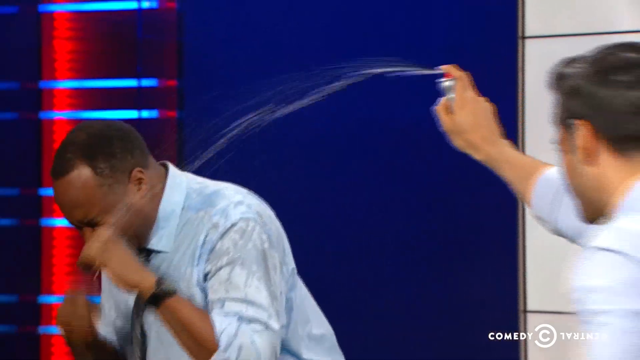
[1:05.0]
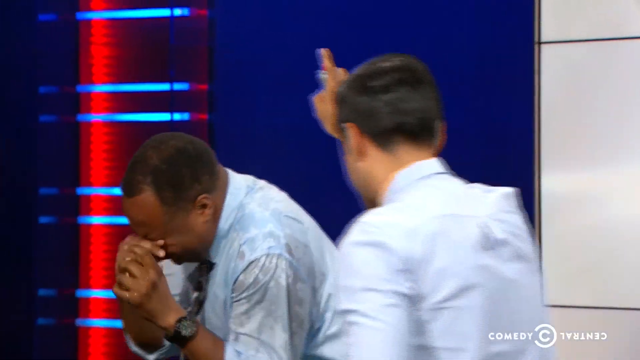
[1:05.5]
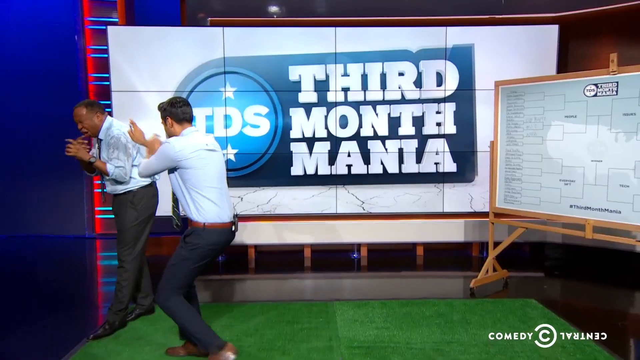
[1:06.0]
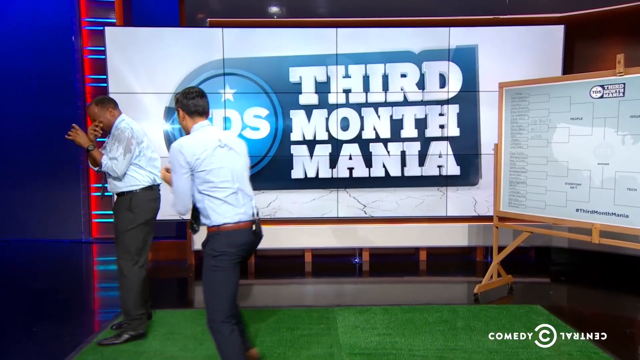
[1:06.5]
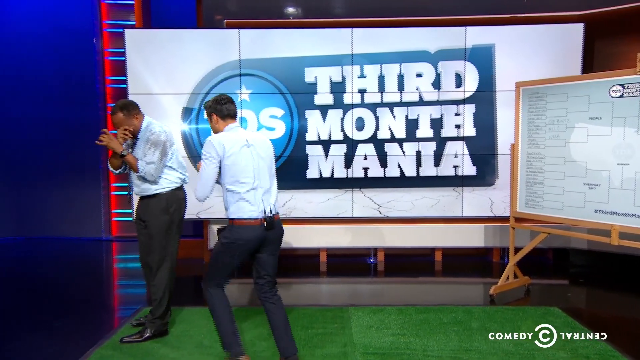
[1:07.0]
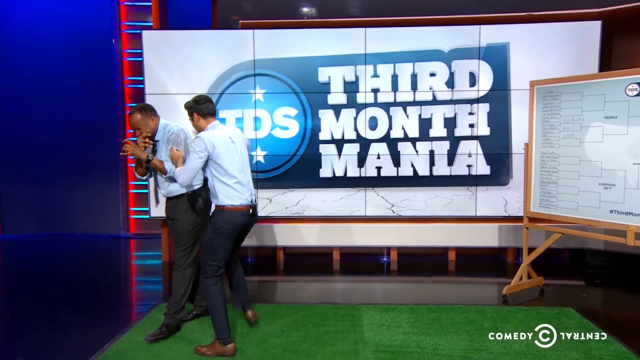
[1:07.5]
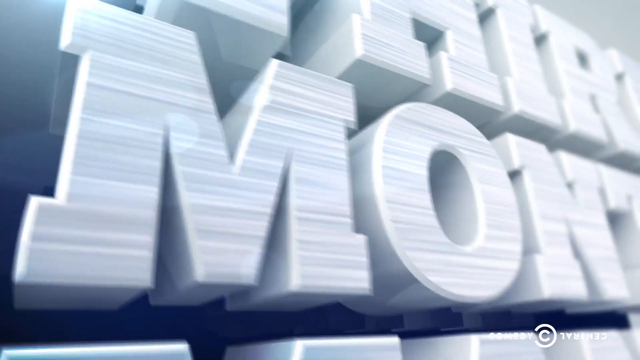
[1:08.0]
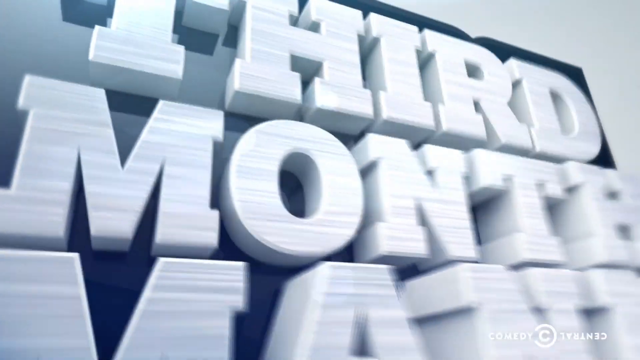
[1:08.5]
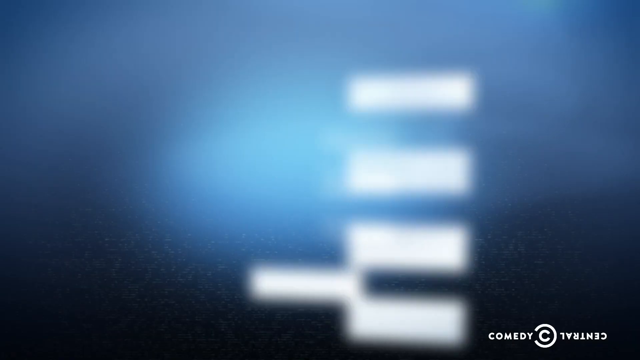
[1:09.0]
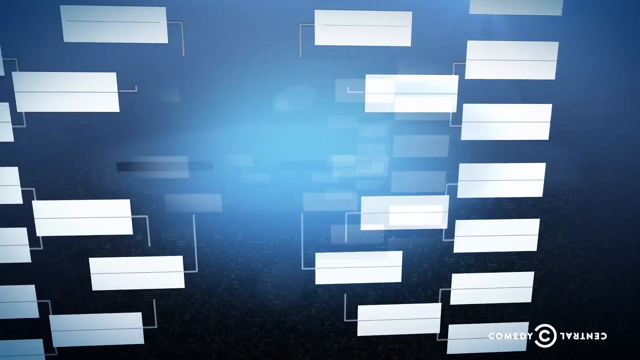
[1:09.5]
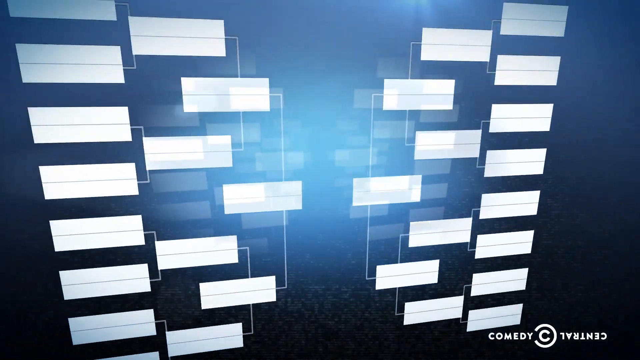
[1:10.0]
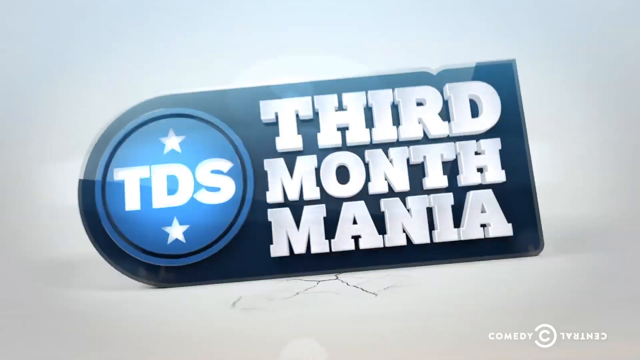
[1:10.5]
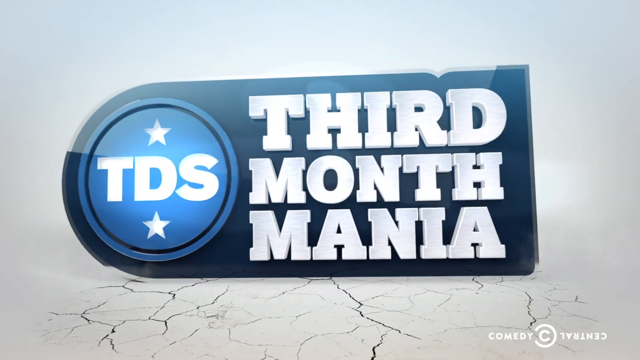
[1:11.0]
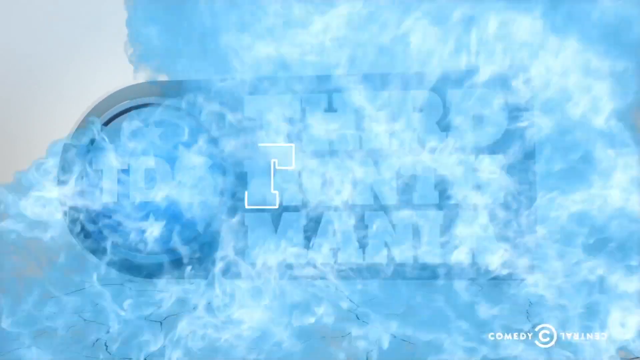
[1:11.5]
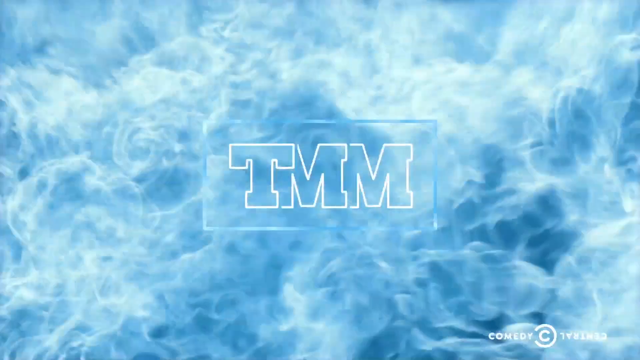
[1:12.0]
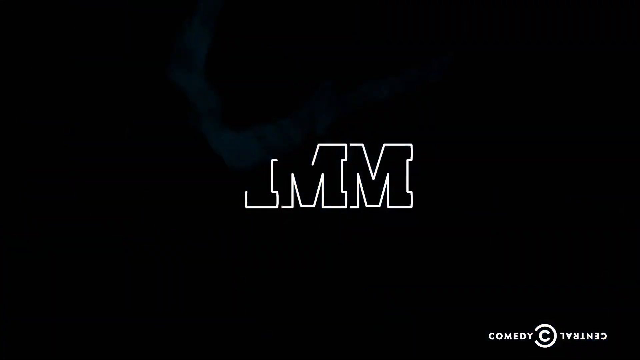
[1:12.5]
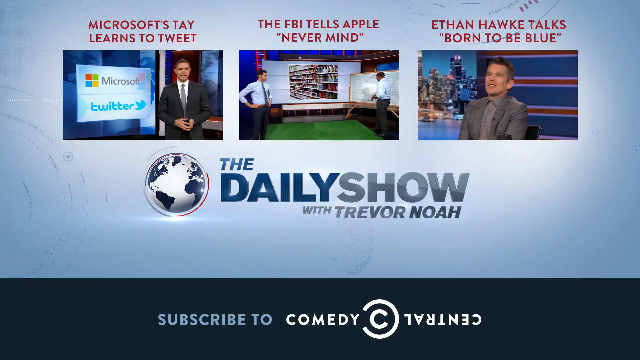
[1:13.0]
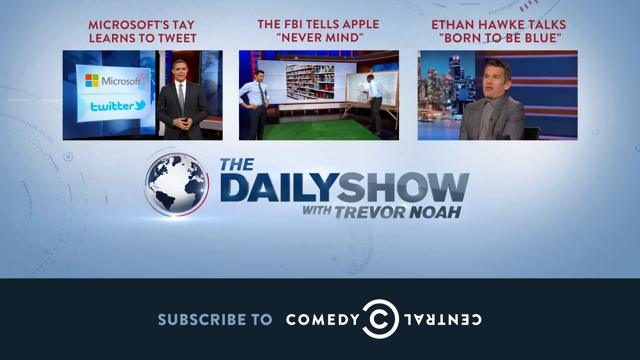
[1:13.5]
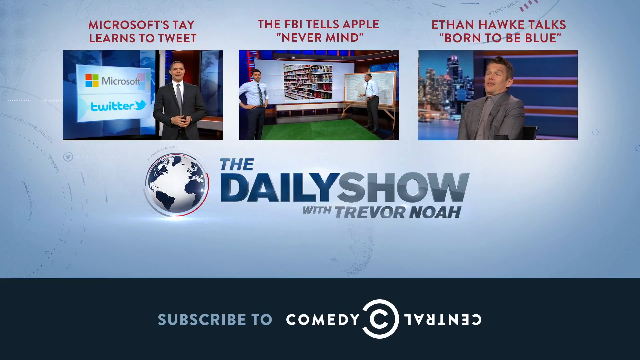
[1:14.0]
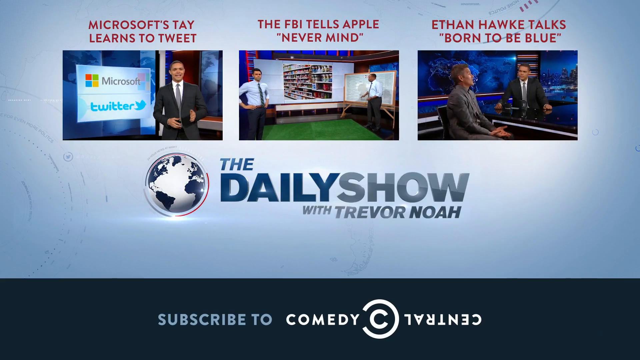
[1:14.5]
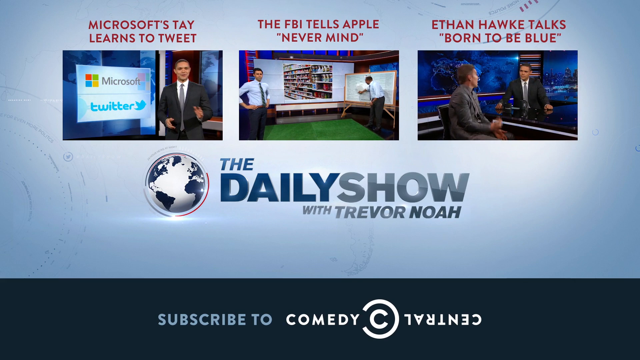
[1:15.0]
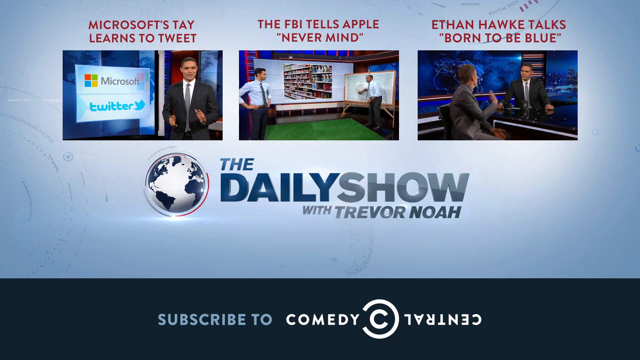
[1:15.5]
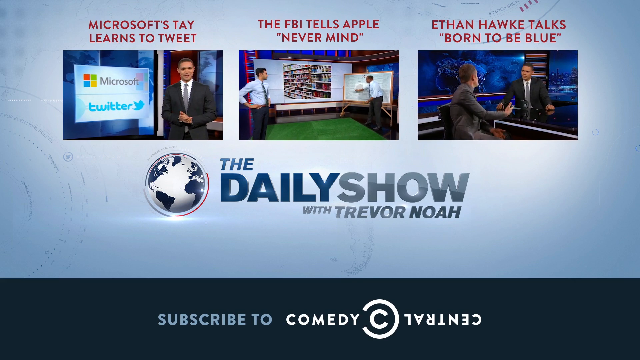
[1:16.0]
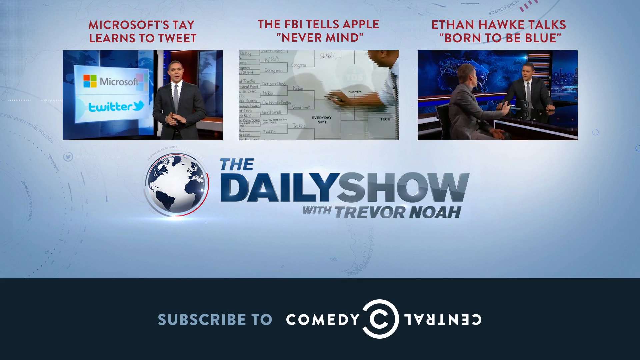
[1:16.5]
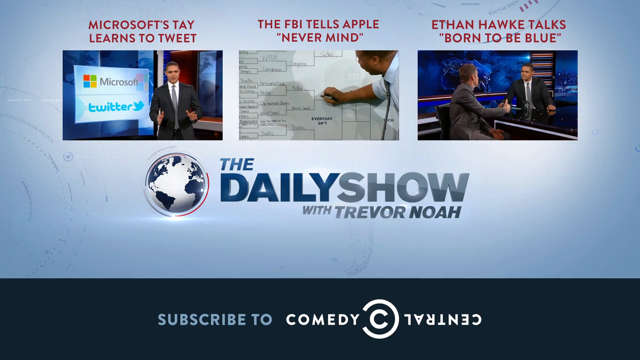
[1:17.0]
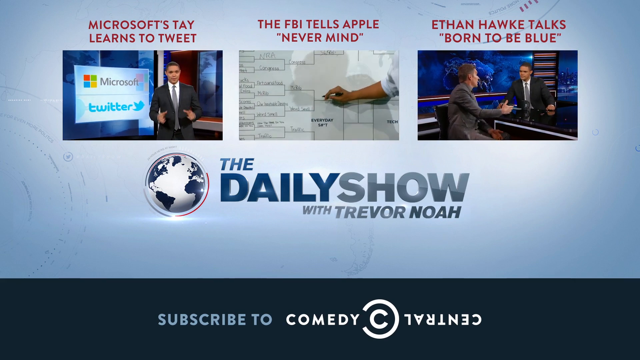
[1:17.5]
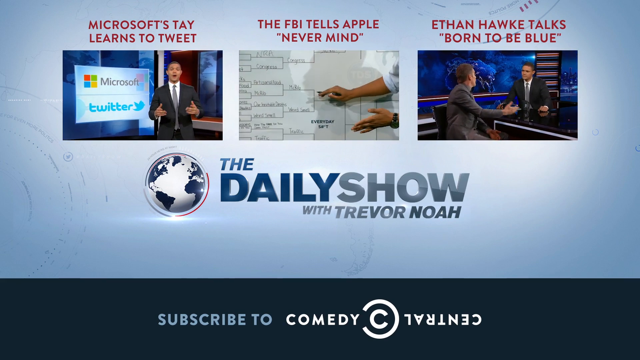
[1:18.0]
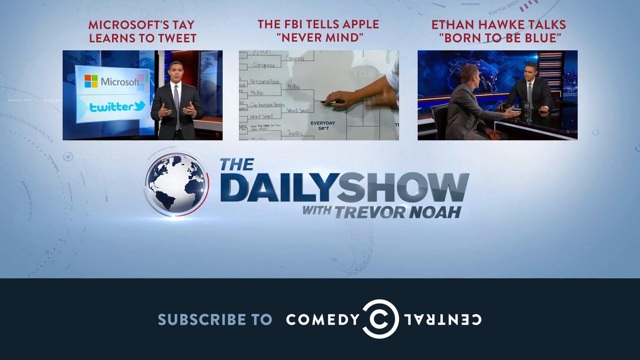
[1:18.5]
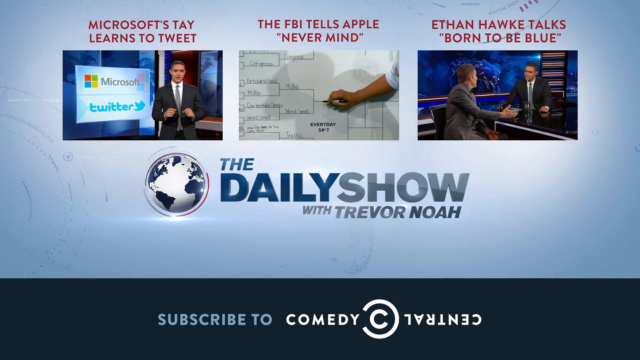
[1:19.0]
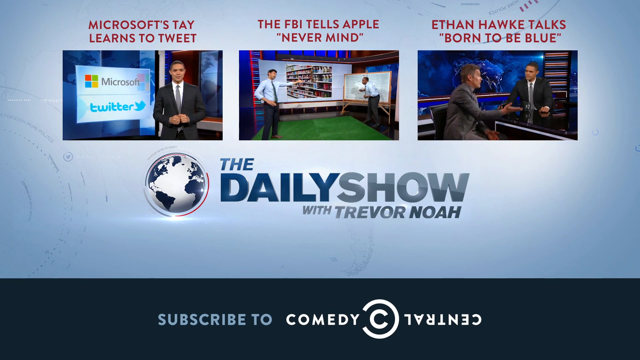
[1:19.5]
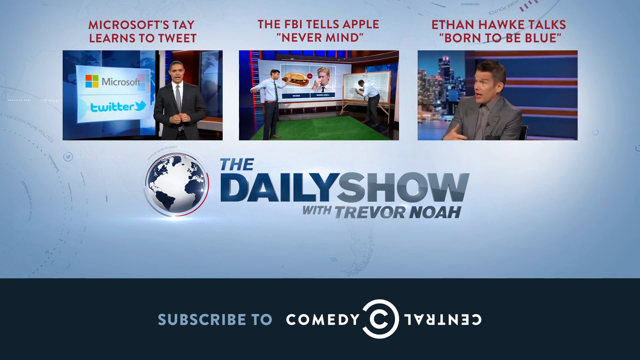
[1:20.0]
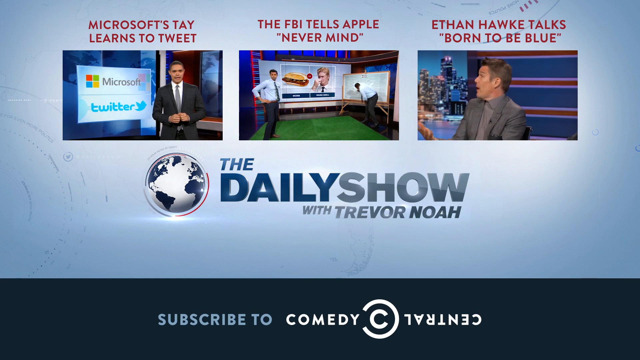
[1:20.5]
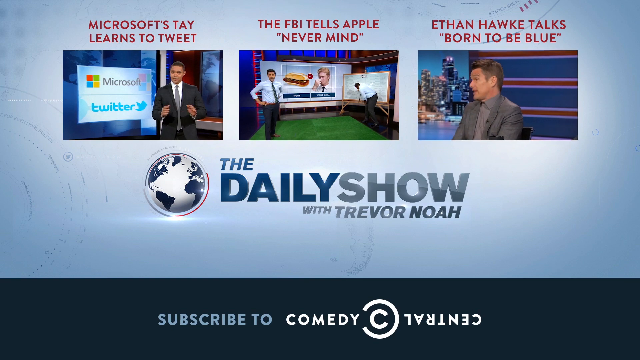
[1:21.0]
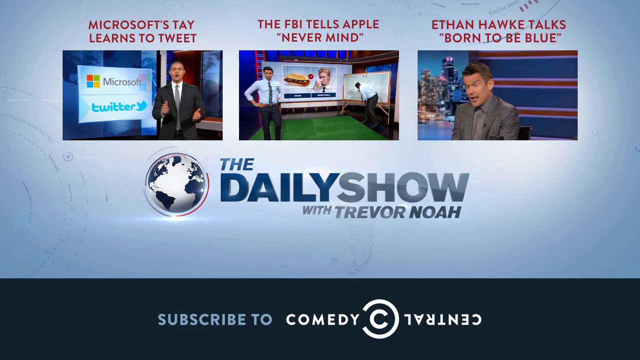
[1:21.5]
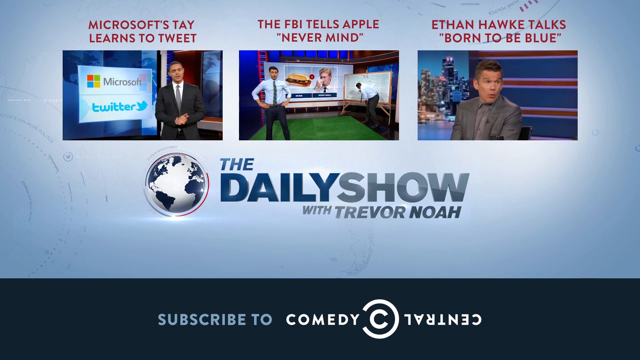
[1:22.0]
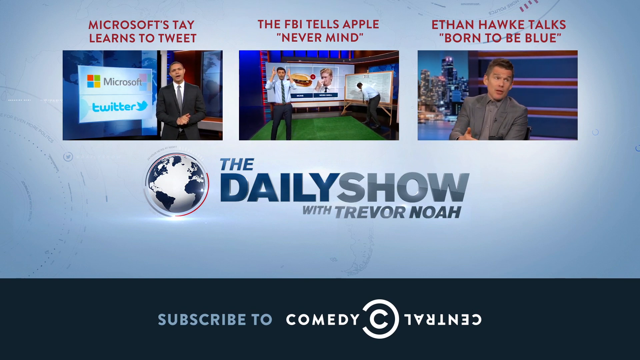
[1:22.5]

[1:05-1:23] The man sprays the other with a little more water. The sprayed man turns away and holds his hand up, and the man spraying stops. He then appears almost to pick up or hug the man he sprayed. The video then turns to a graphic that says "3rd month mania", with a lot of white text and capitalized letters. There is a quick glimpse of a blank bracket with white empty bubbles on a blue background. A logo also says "3rd month mania" and shows the letters "TDS" in white text with a blue circle around them, along with a couple of white stars and what looks like a crack in the graphic below it. A quick blue color, almost like blue flames instead of traditionally colored flames, covers the screen. Finally, a "TMM" logo appears very briefly on a black screen.